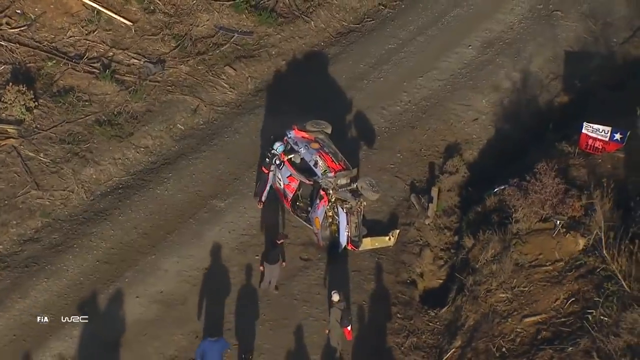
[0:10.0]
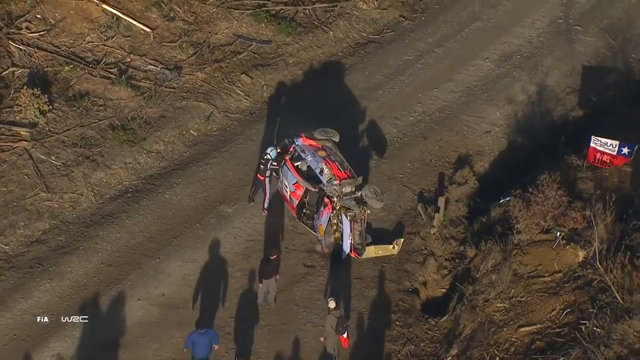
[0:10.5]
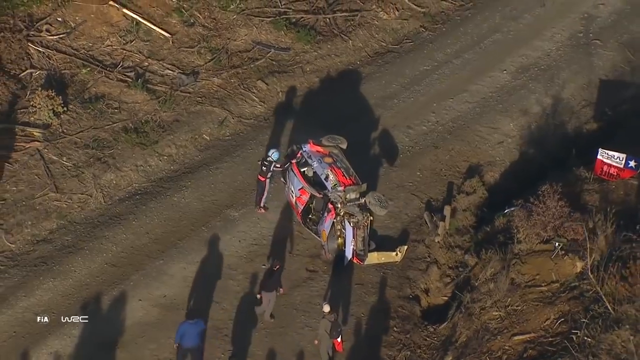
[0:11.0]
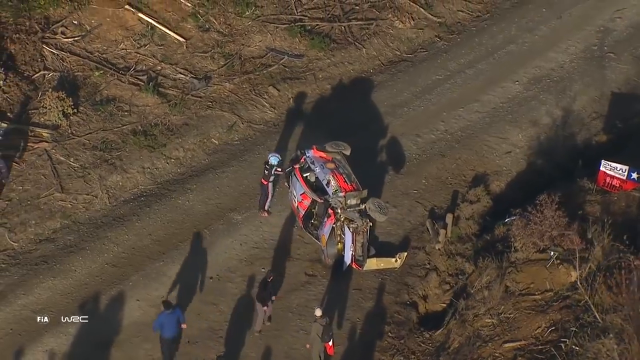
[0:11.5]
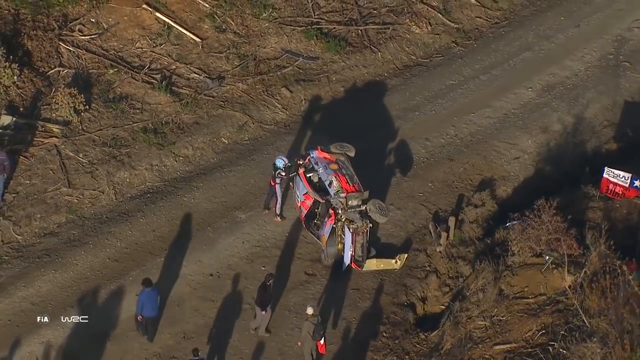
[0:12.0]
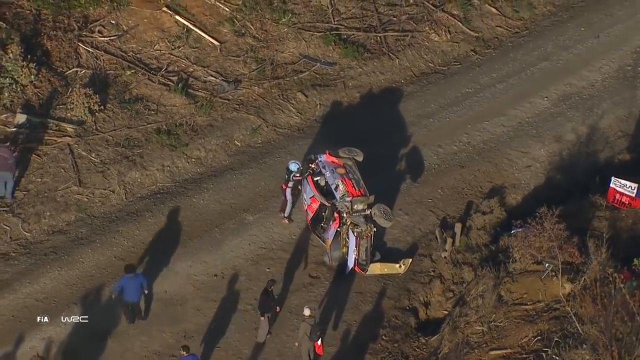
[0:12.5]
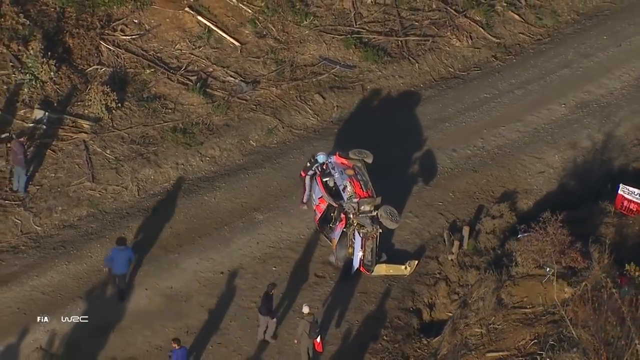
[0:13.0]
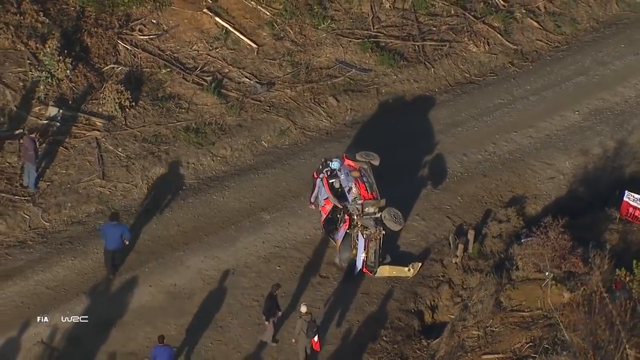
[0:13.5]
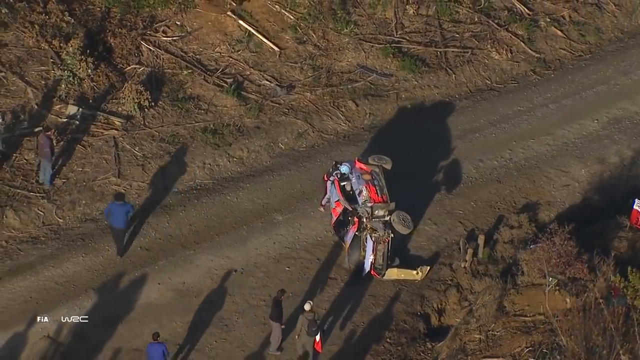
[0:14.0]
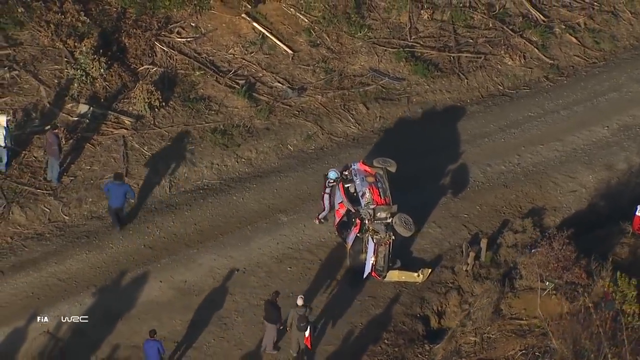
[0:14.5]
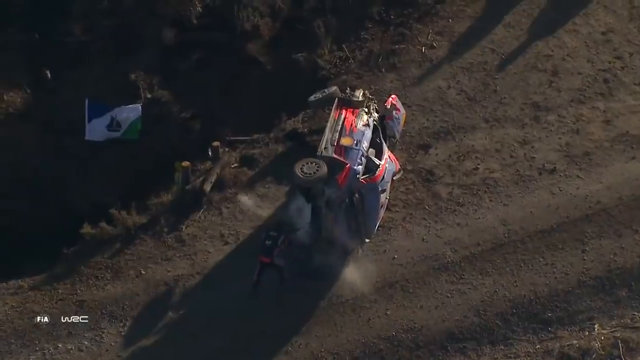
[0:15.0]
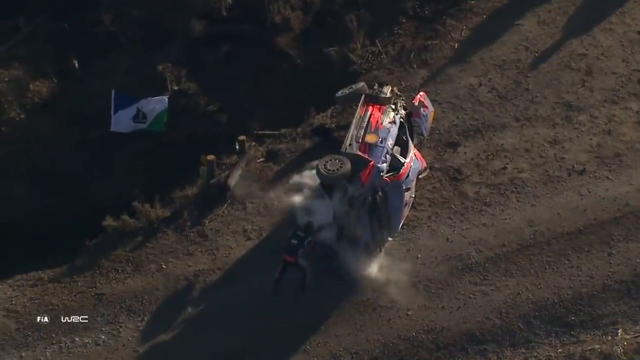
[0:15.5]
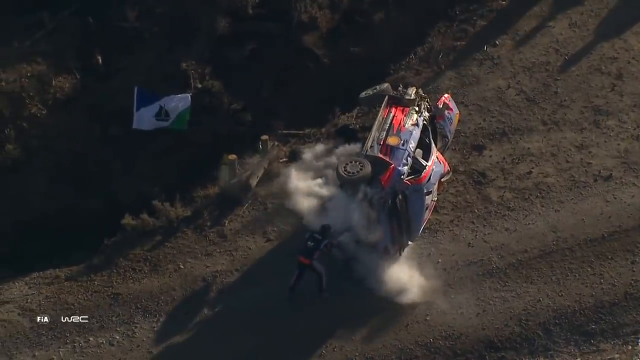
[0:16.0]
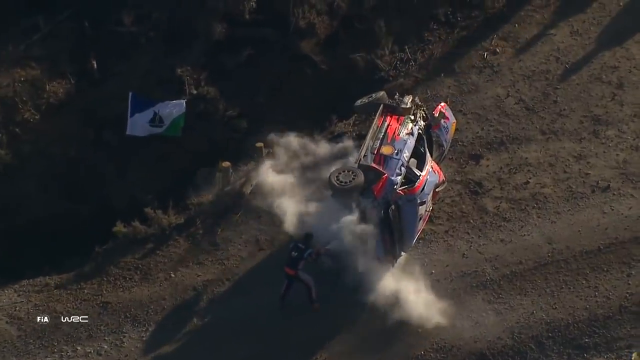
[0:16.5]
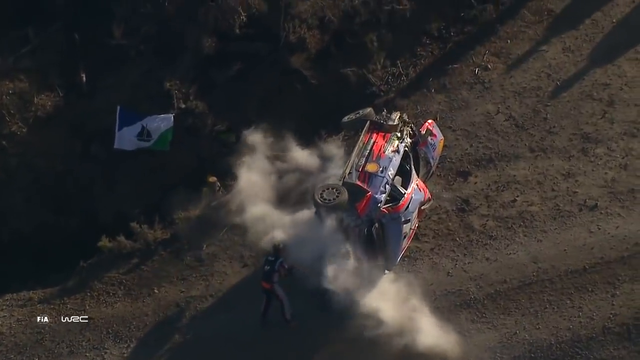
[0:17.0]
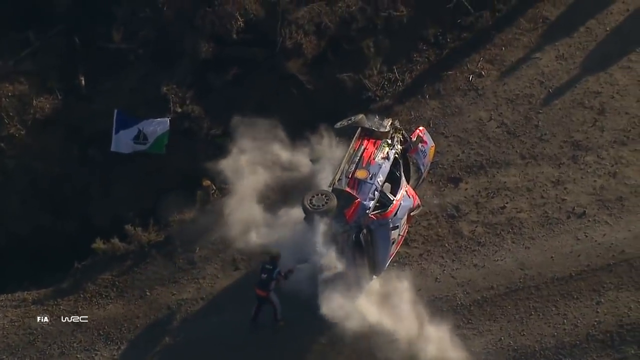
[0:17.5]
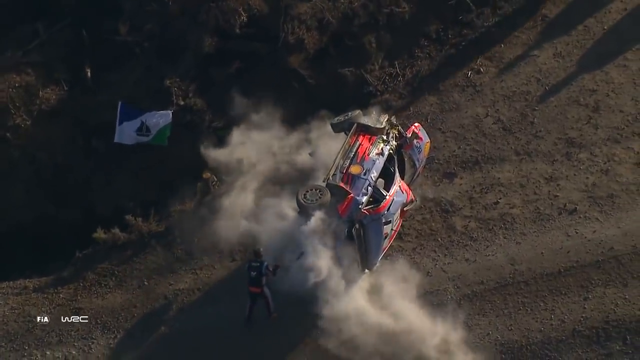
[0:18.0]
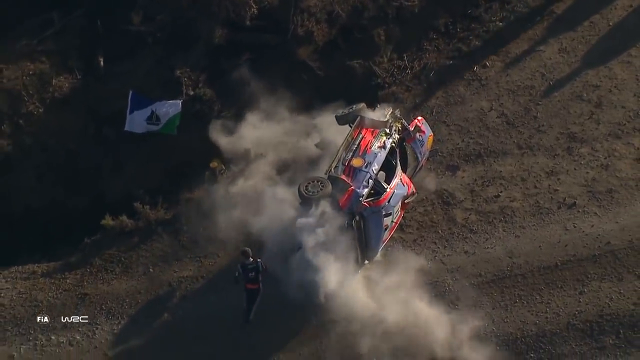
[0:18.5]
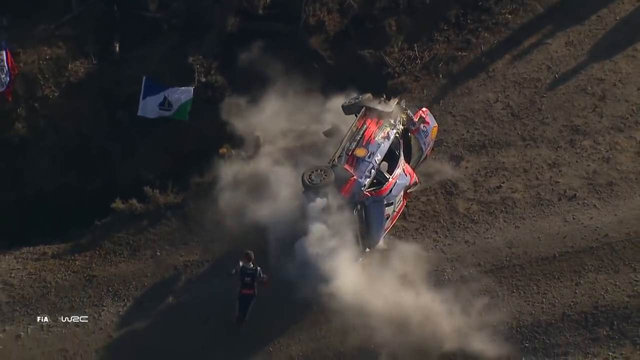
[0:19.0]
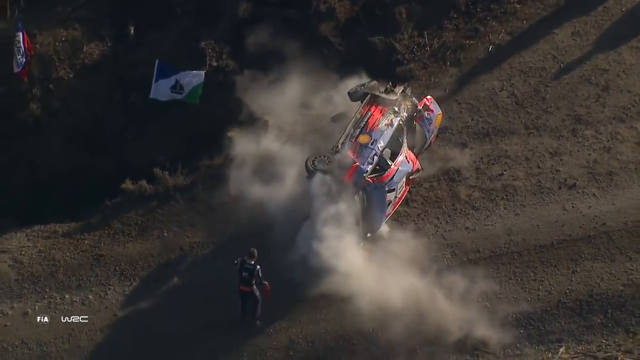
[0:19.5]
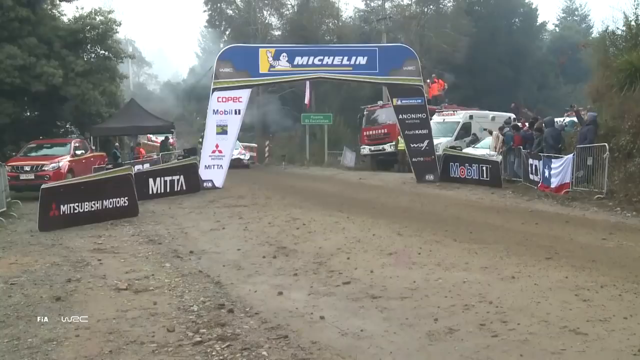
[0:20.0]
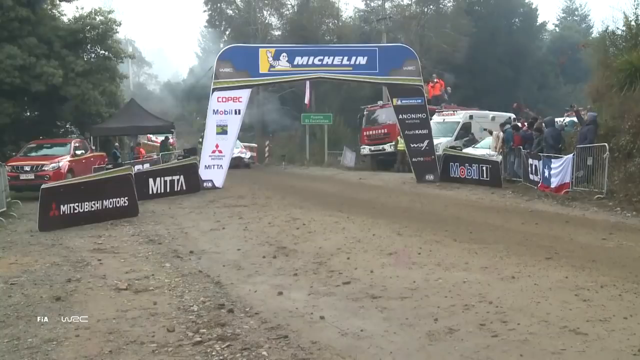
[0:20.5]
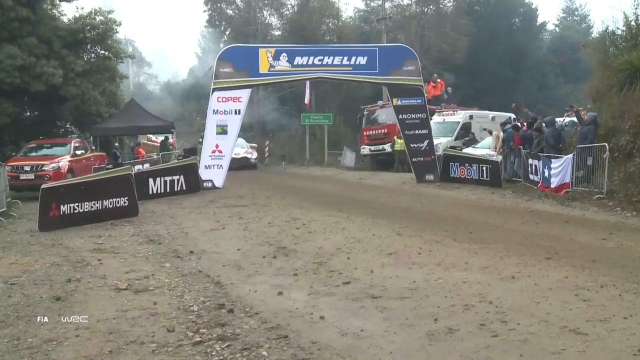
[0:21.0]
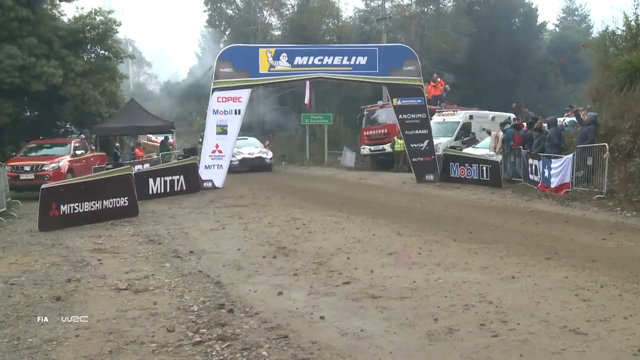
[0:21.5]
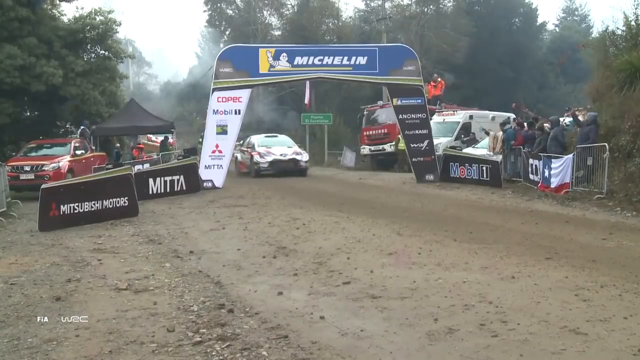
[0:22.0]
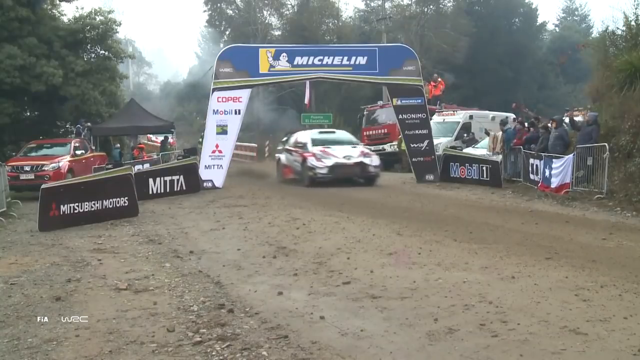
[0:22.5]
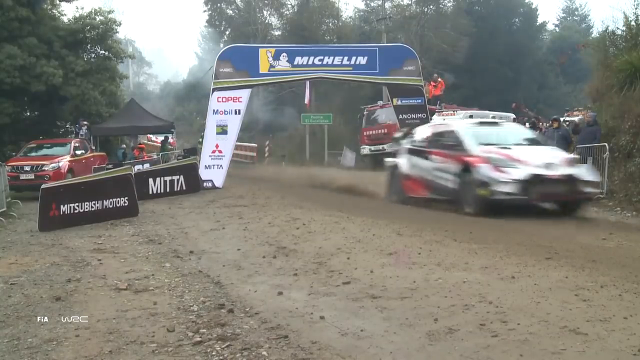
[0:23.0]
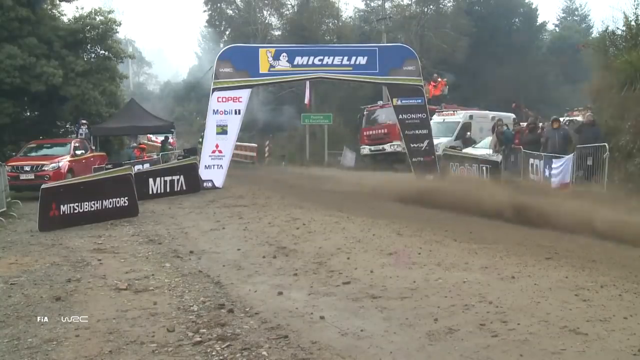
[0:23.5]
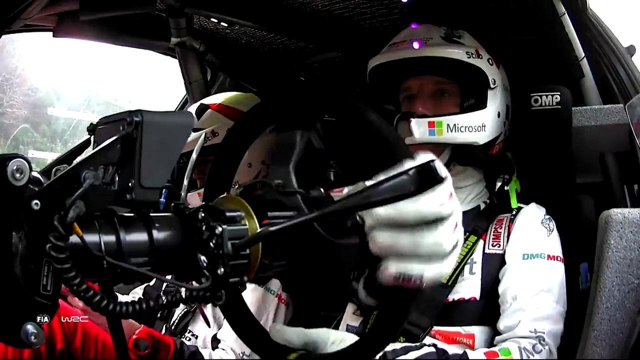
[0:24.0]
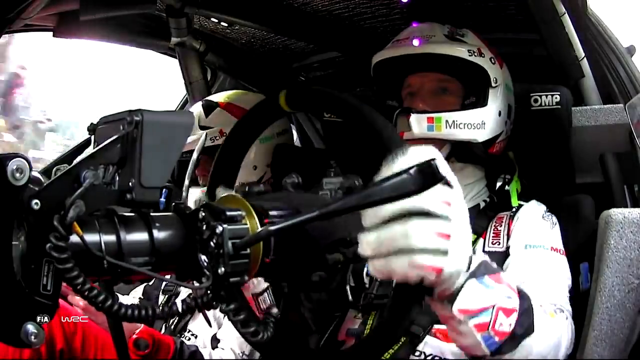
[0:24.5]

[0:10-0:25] Highlights from a 2019 rally in Chile show one of the cars flipped onto its side on an unpaved dirt road. The video cuts to a view inside the race car, where a driver and a passenger sit in the front seats wearing helmets, gloves and protective gear. Outside the car, a person jumps up and seems to try to look in the window to check on the occupants. A lot of steam is being sprayed down the side of the vehicle, possibly to extinguish or prevent a fire.